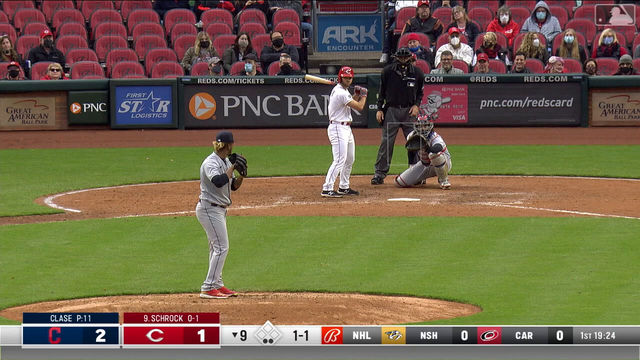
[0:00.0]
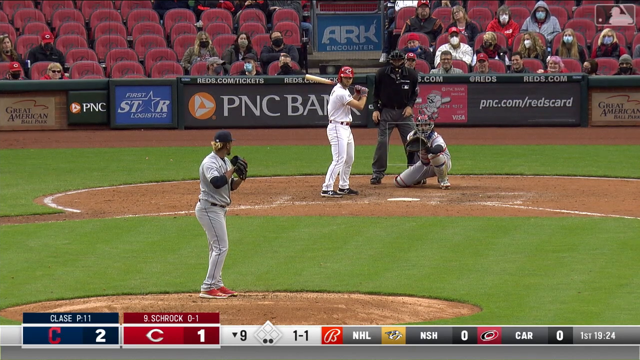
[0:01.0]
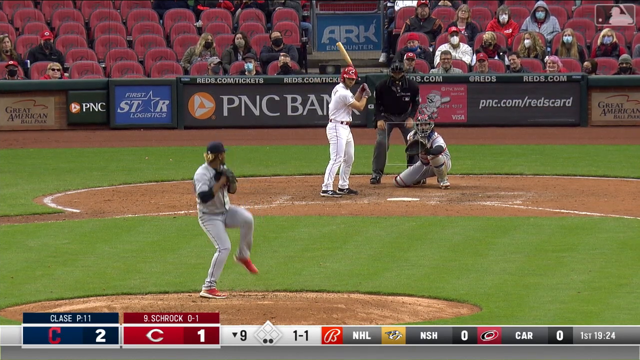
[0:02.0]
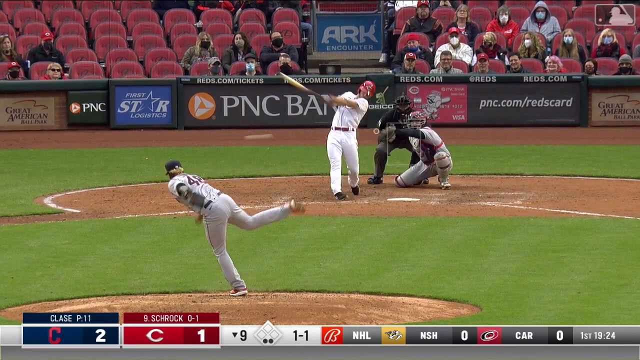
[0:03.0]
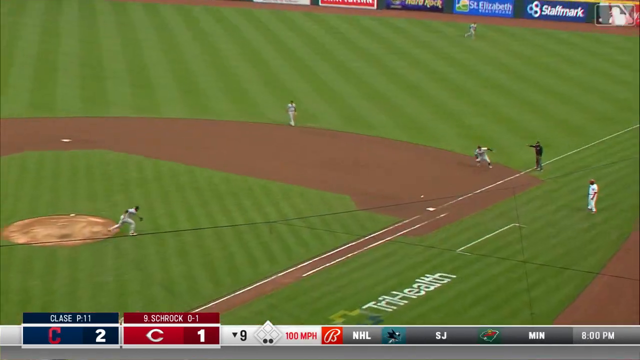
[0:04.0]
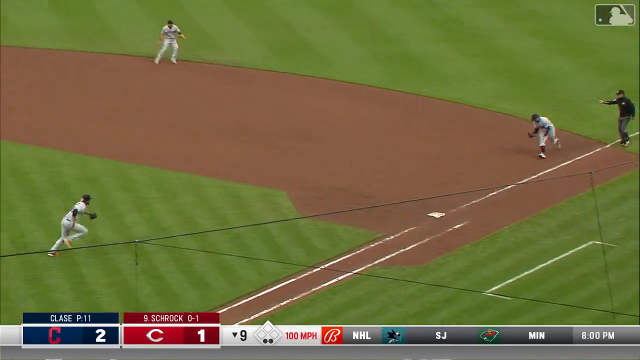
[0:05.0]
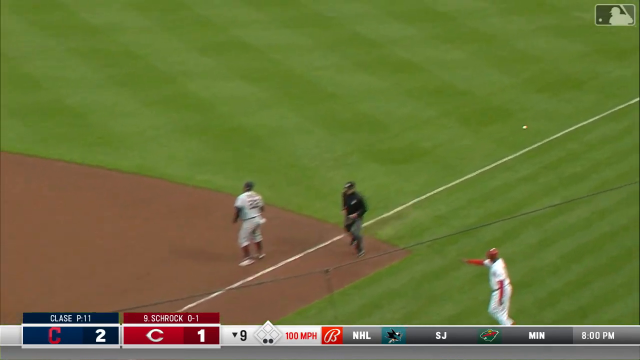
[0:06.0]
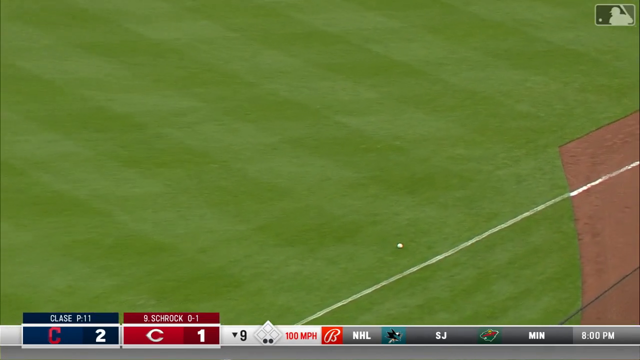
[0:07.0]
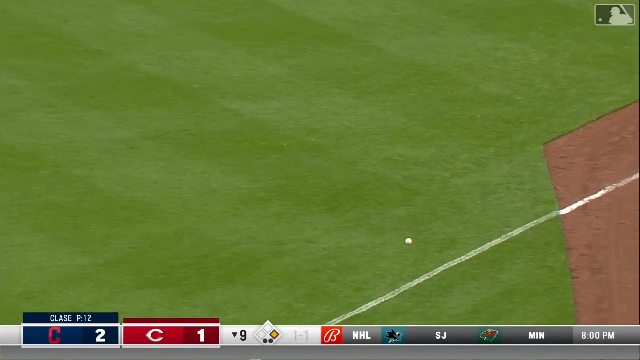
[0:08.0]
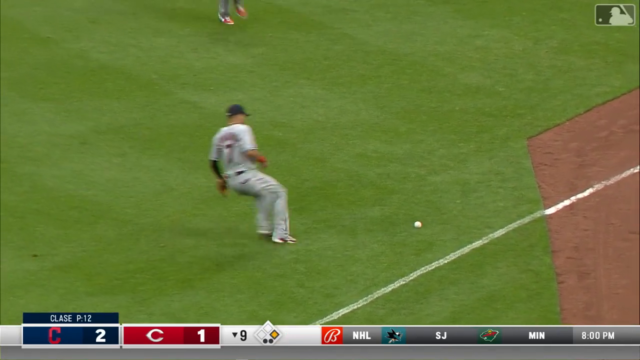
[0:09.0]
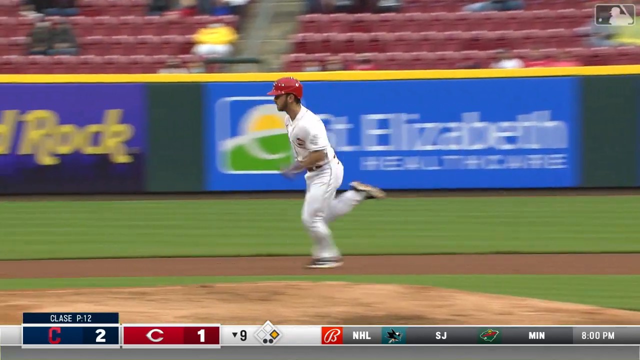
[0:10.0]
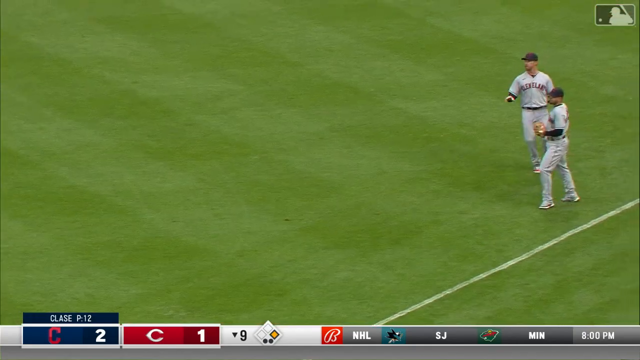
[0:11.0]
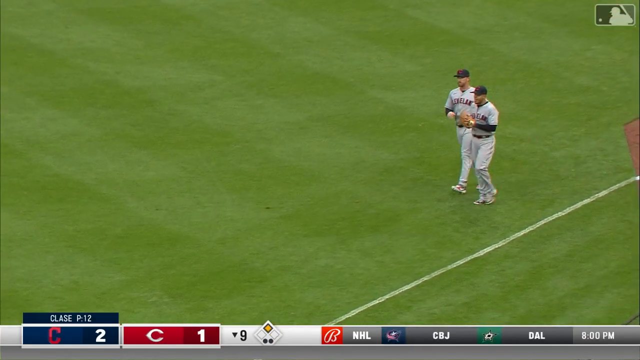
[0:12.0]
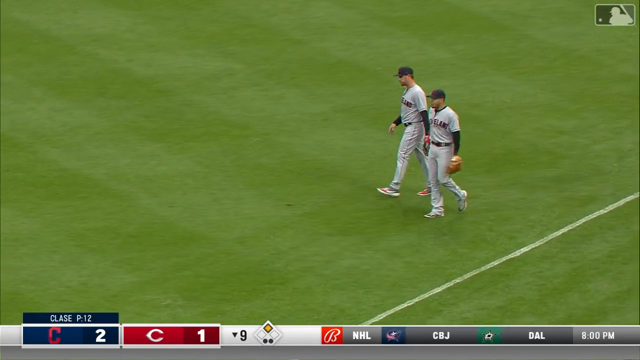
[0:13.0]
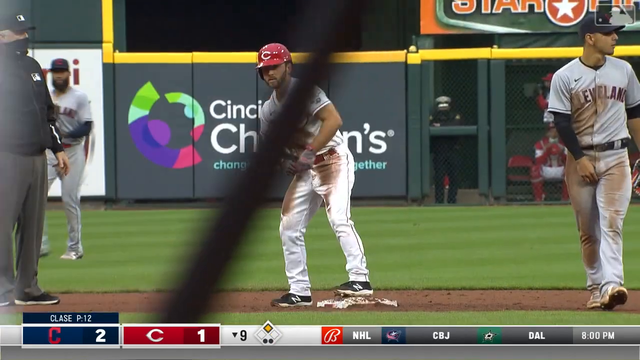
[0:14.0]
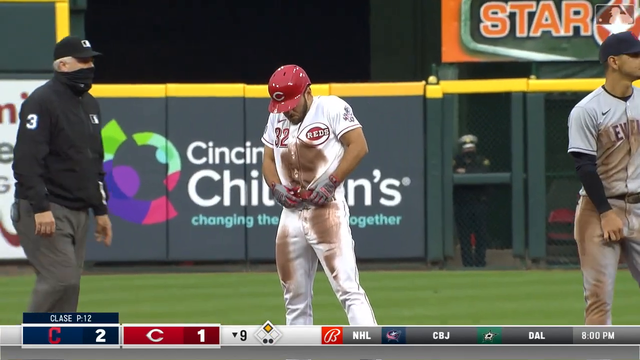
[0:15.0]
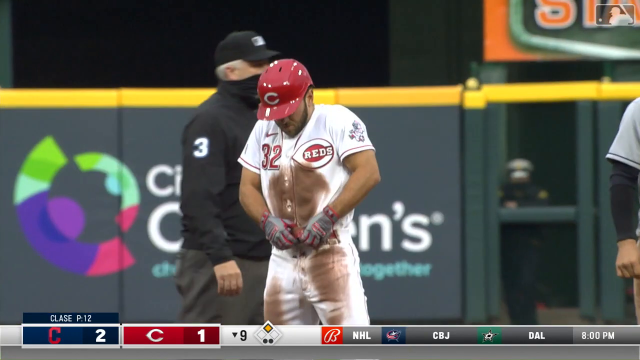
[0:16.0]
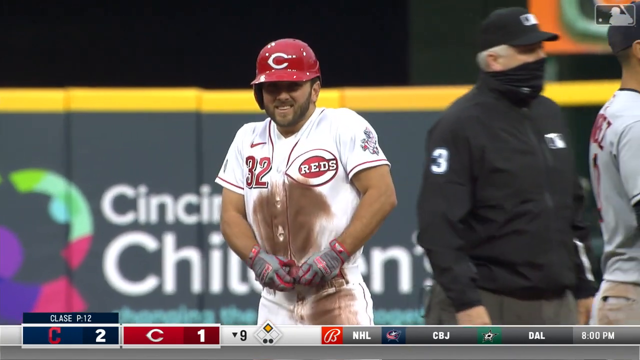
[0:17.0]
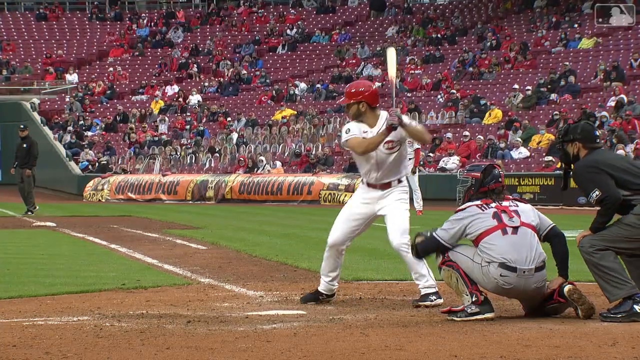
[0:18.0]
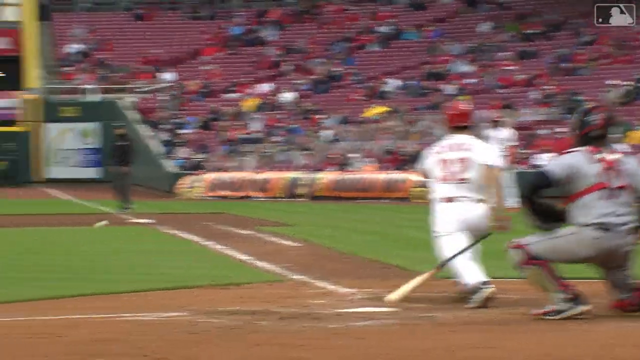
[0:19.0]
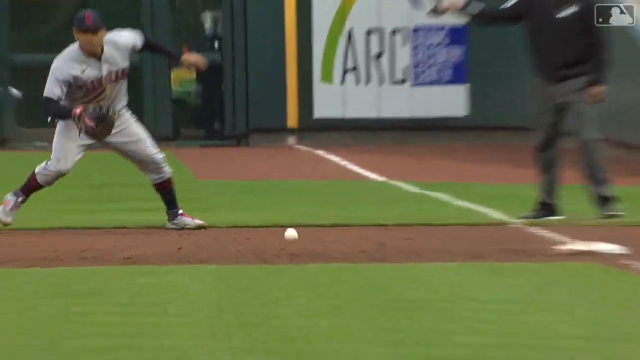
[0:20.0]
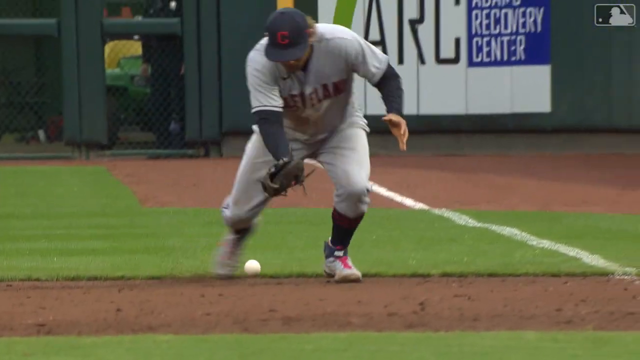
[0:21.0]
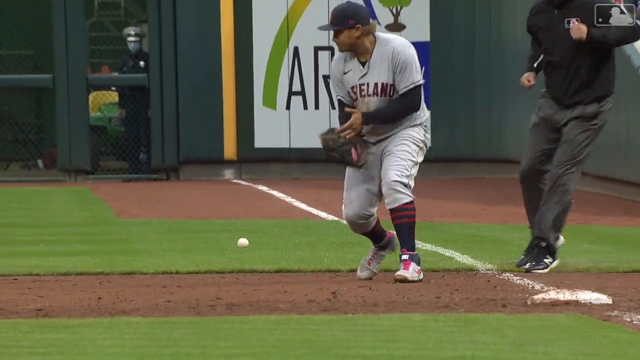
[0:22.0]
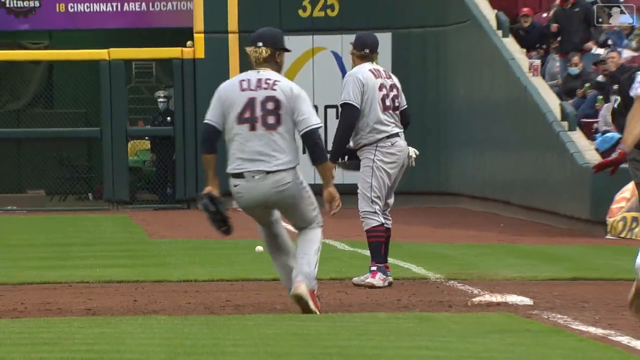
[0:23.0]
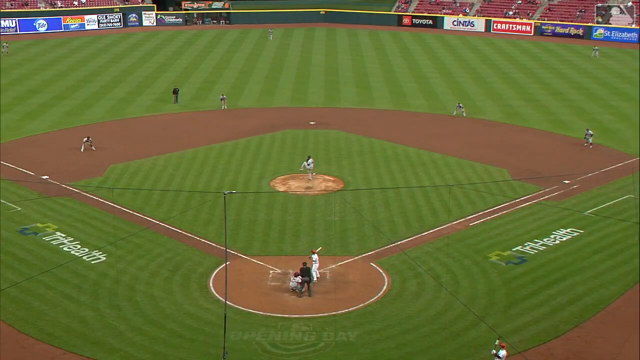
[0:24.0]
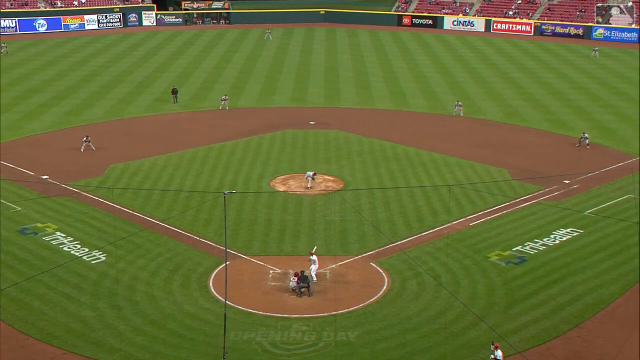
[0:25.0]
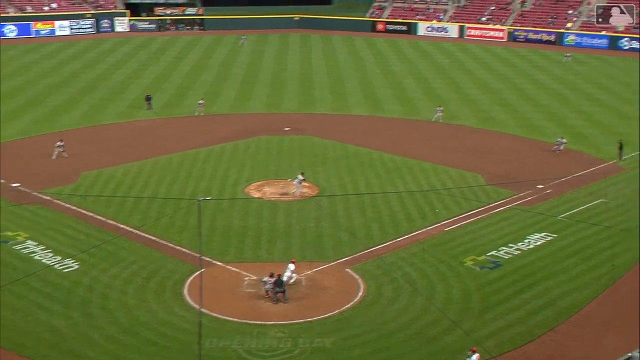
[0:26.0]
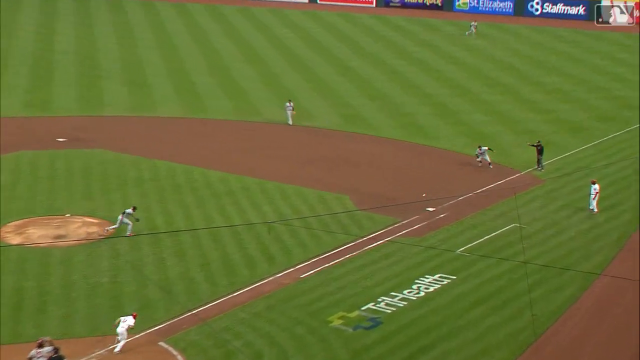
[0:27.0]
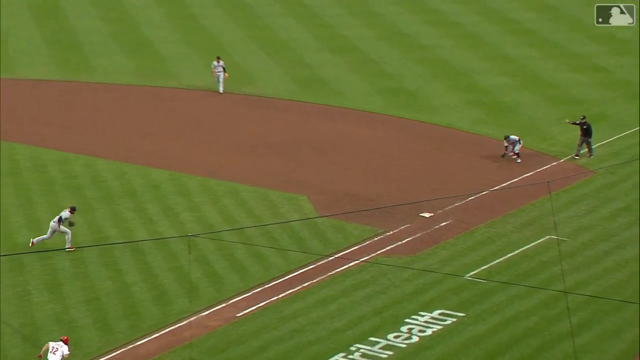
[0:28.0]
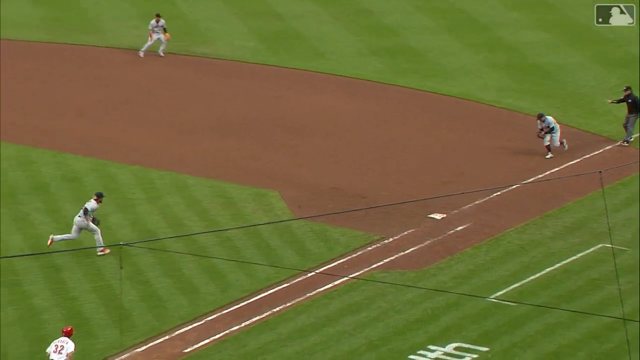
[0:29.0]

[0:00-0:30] A baseball game takes place outdoors, in a stadium with large red seats for the audience. The audience looks pretty sparse, and most of the spectators wear masks, possibly indicating the game took place during COVID. The pitcher throws the ball to the batter, who hits it. The batter runs across to the bases and dives to keep his spot. After the dive he is shown covered in dirt, somewhat wincing in pain as he empties the dirt out of his uniform. Various players on the team run around, their numbers and last names on the backs of their uniforms. The field looks freshly mowed, with symmetrical lines running down it, and it is bordered with advertisements from various companies.